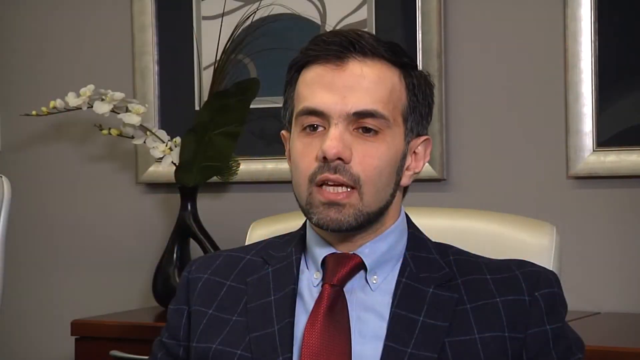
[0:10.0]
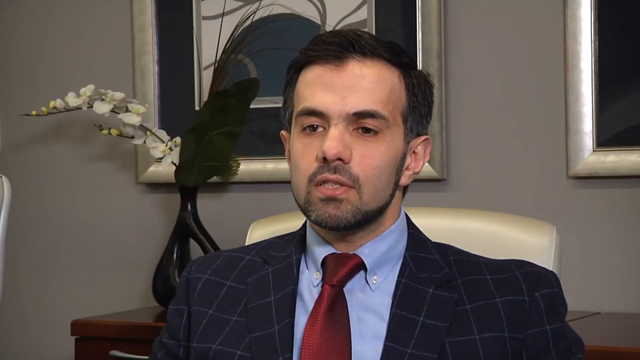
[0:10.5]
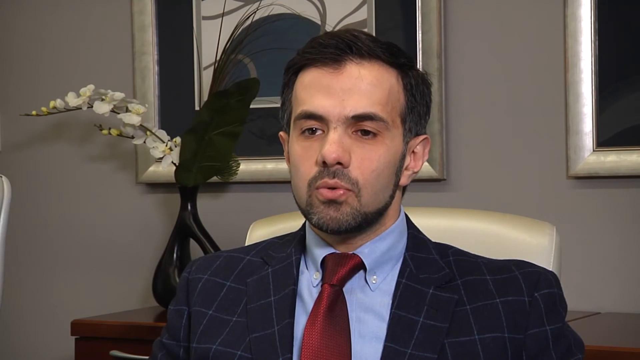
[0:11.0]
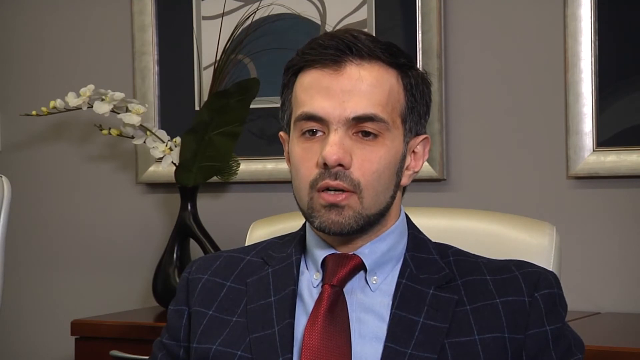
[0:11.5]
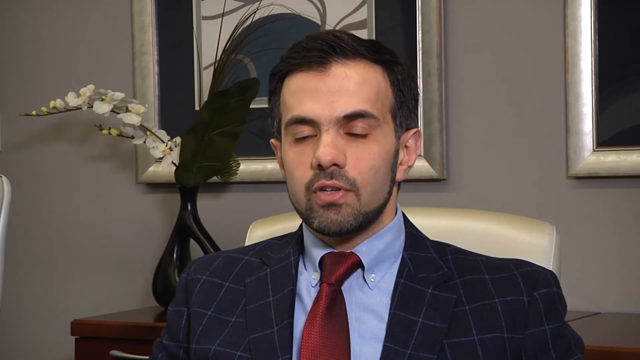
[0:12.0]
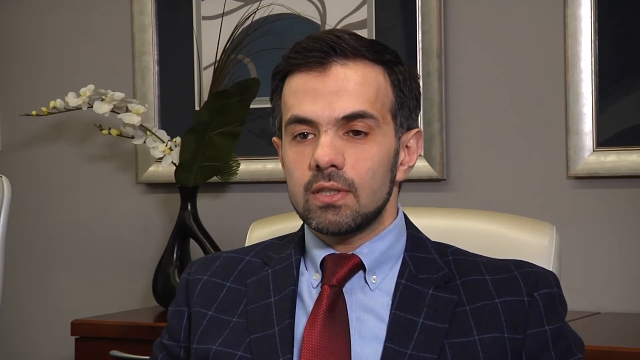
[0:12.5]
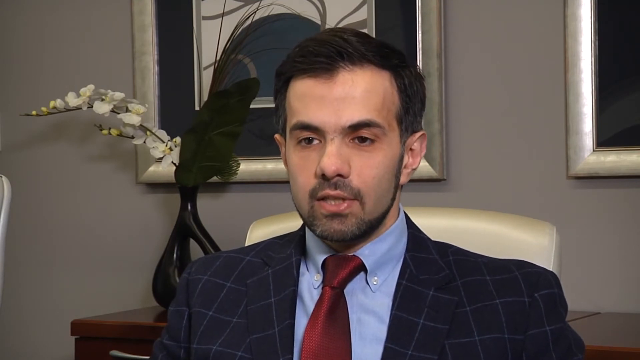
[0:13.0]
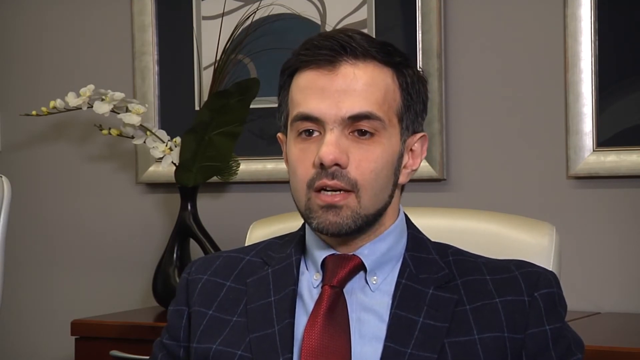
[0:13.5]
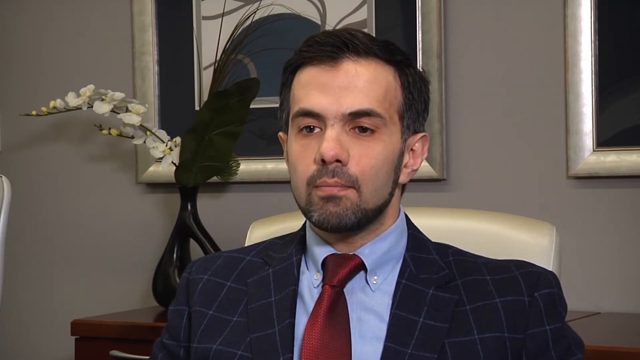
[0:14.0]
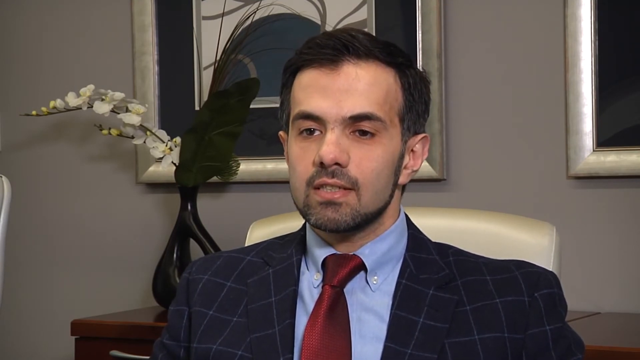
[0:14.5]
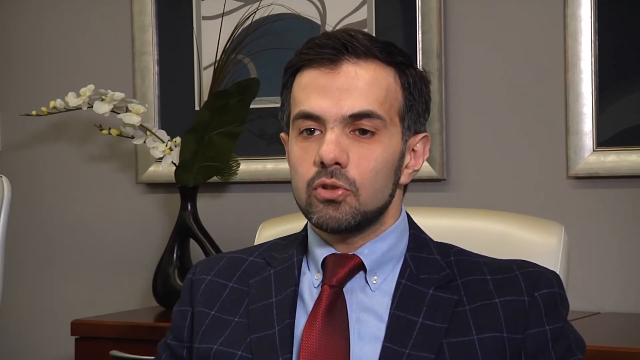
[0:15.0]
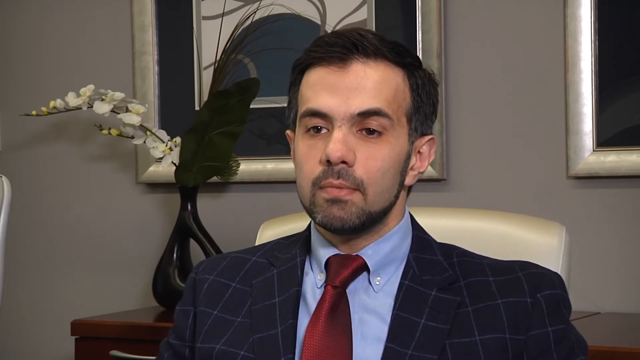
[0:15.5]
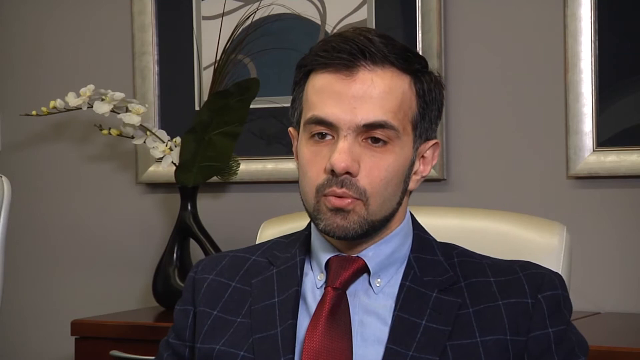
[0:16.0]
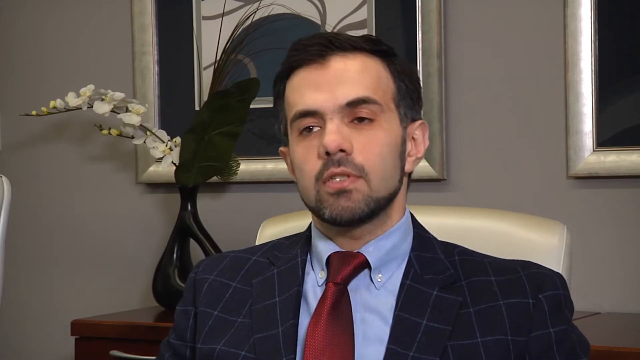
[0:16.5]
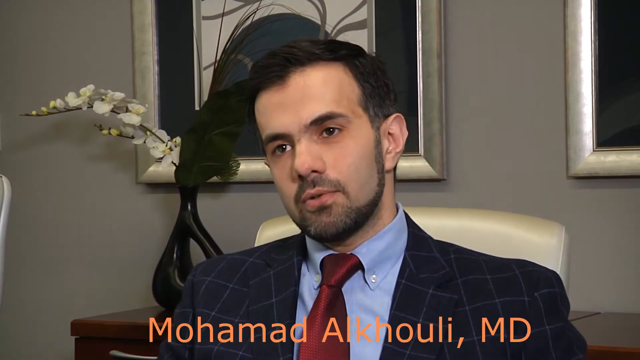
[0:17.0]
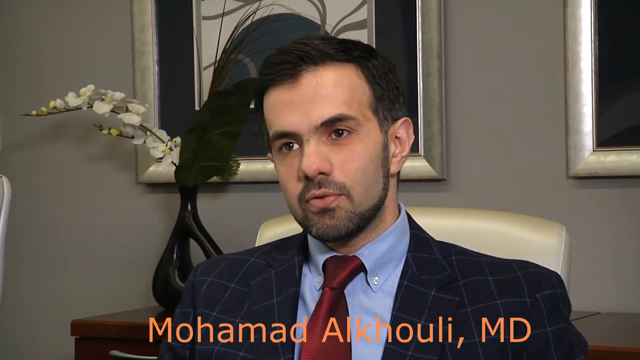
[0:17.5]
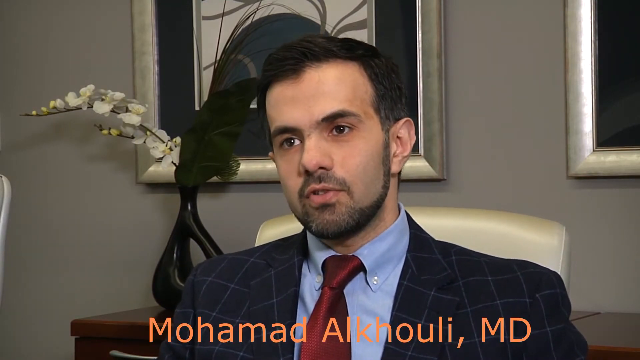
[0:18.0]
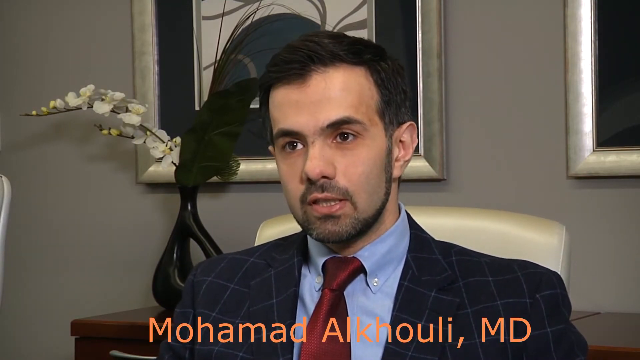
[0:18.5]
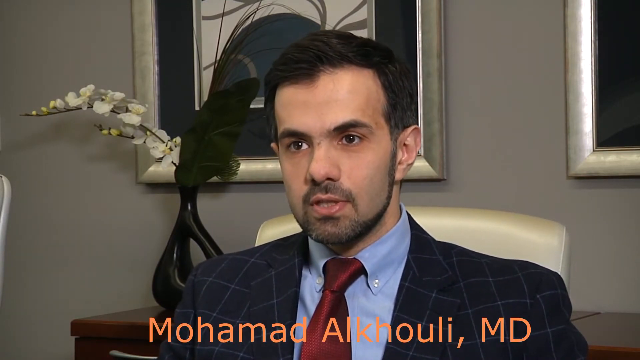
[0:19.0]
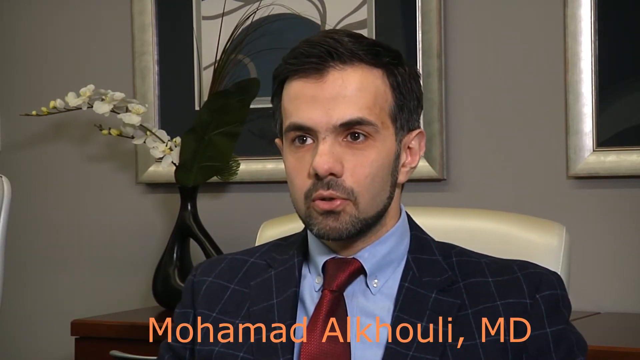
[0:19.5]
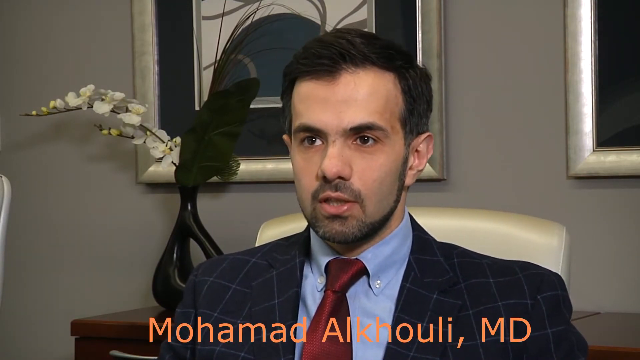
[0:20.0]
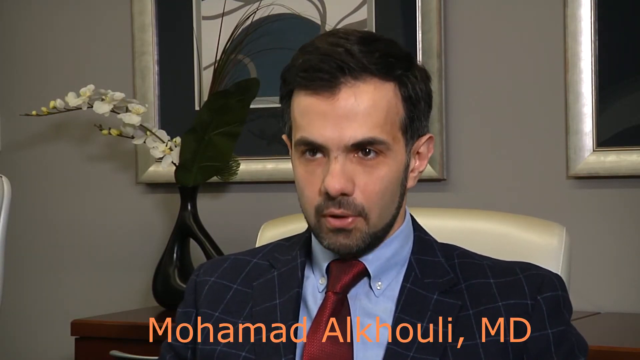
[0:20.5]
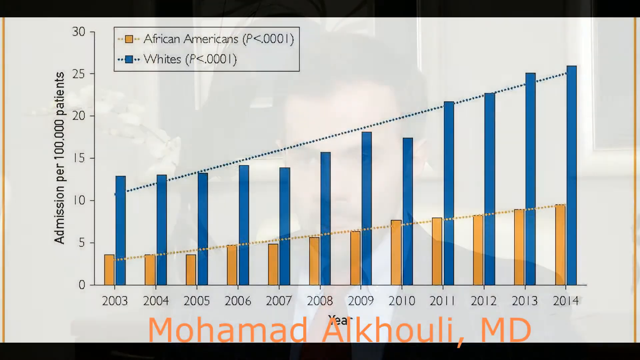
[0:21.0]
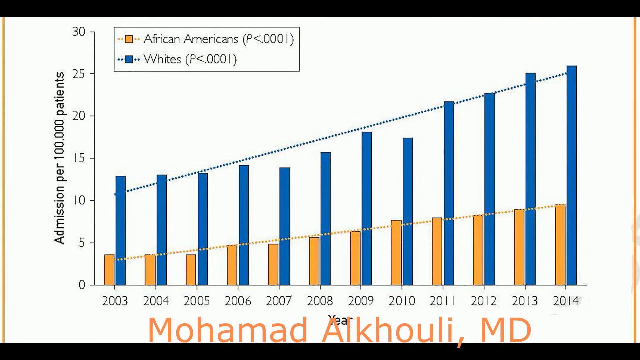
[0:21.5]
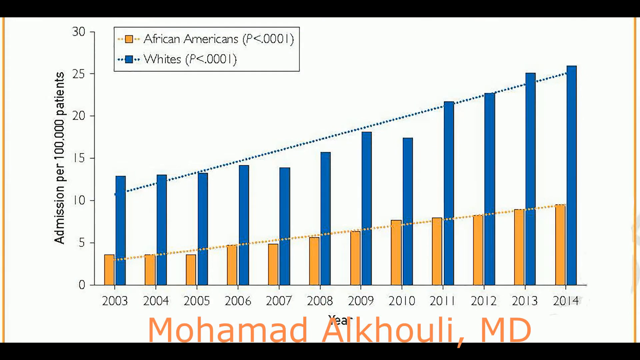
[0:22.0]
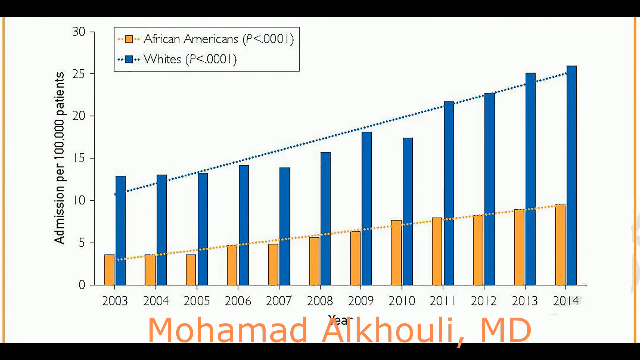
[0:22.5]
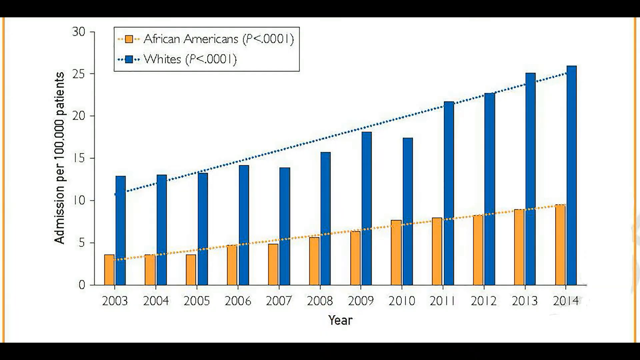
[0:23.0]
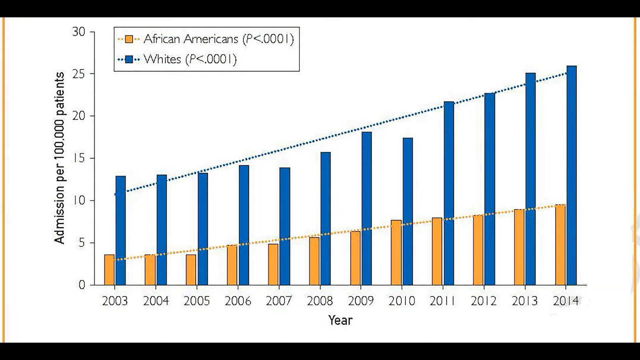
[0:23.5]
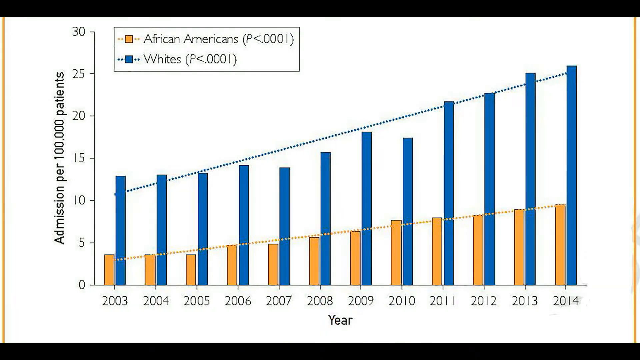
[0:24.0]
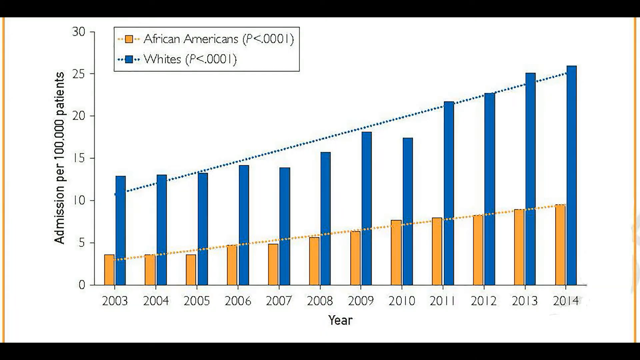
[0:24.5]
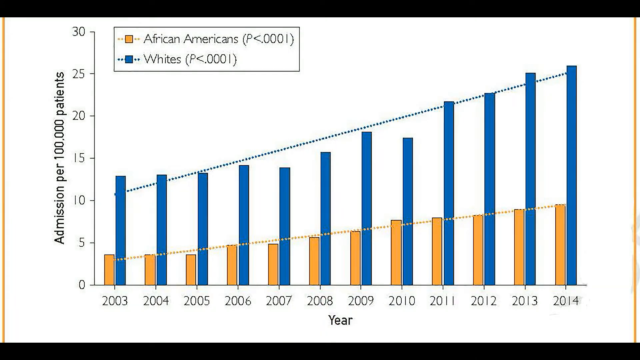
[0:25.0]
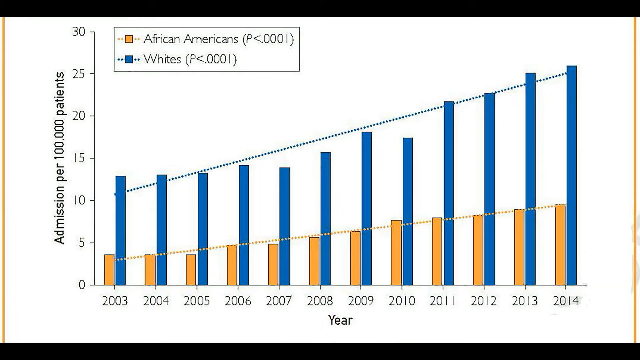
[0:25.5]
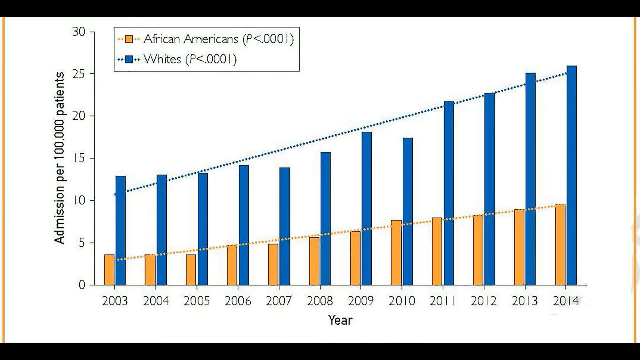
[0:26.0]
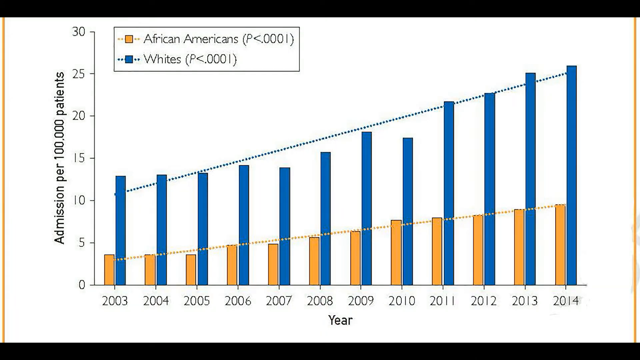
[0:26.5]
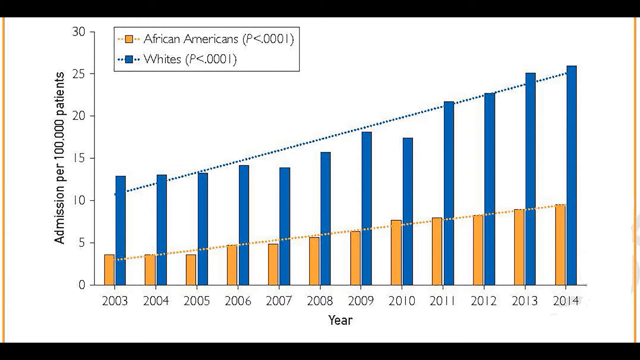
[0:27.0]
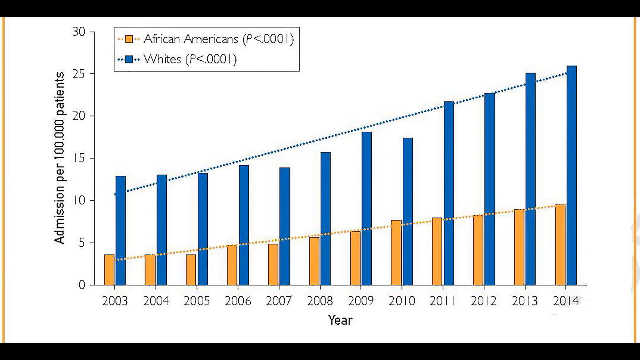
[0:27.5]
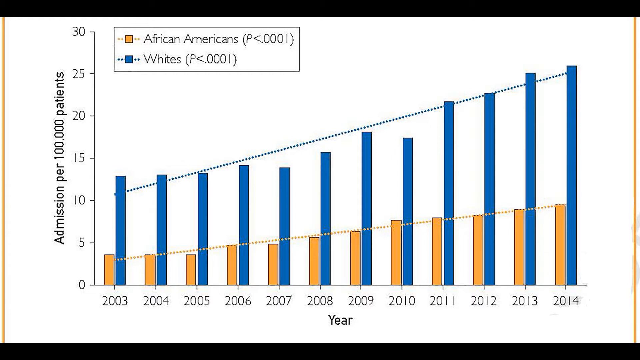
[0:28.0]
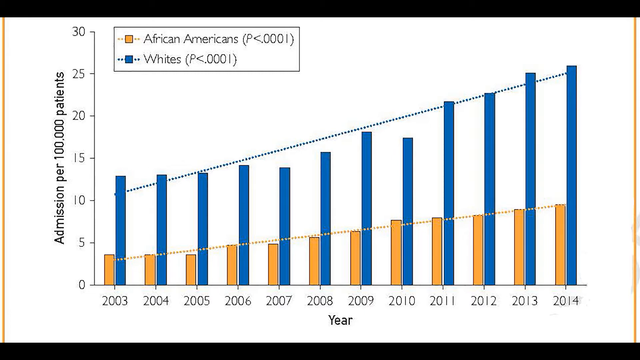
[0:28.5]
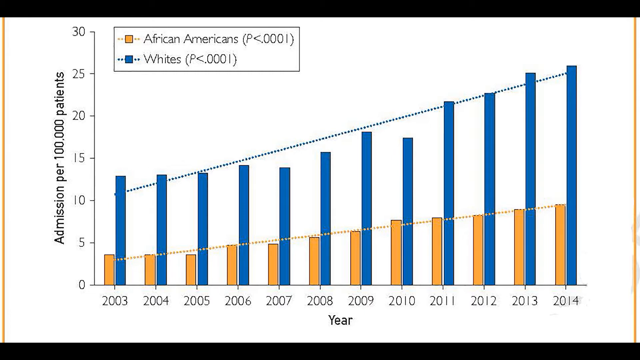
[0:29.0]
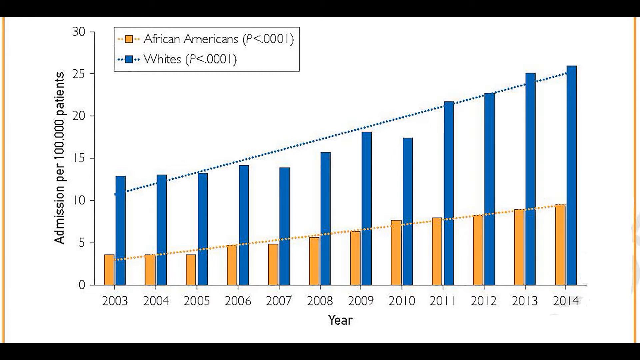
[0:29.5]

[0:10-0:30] A man talks to camera. He appears to be somewhere in the range of white to Hispanic, with dark eyes of an indistinct colour, dark hair, and pale but tan skin. His beard is beginning to turn white, and his teeth are good but not luminous white. He wears a dark blue suit with a line of check in the fabric, the check perhaps grey, along with a maroon tie and a mid-blue shirt with the collar buttoned down. He is sitting in a chair of which only the top of the backrest is visible; it appears to be white to cream leather or fake leather. The room is a kind of greige color, with generic art on the walls behind him: silver frames, black mats, and some sort of black and grey on white content that cannot be made out. Some kind of black and white sculptural element, also unidentifiable, is on some kind of table behind him. There looks to be another chair off camera to one side. Partway through, the view switches to a graph that appears to be about admissions per 100,000 patients, comparing African Americans and whites over time.